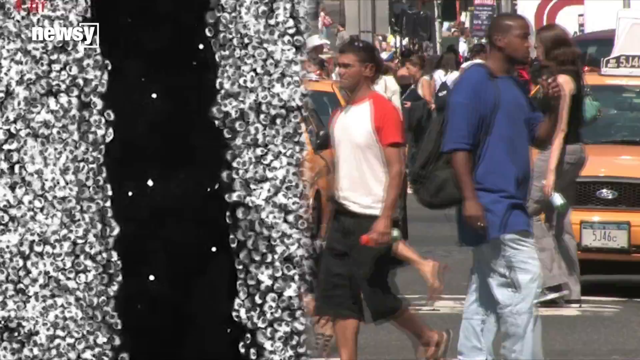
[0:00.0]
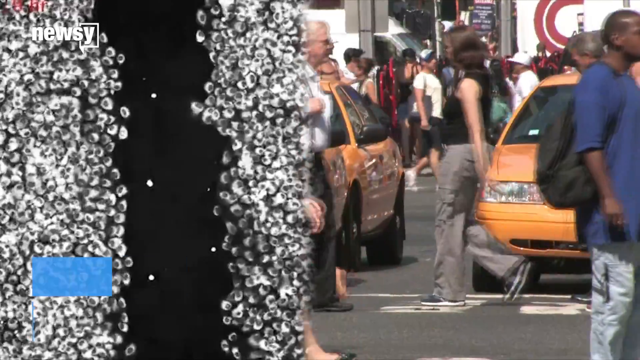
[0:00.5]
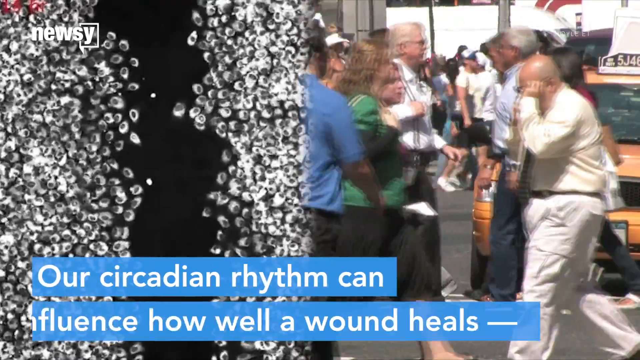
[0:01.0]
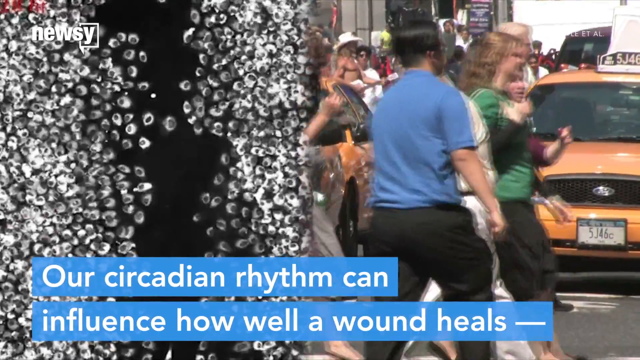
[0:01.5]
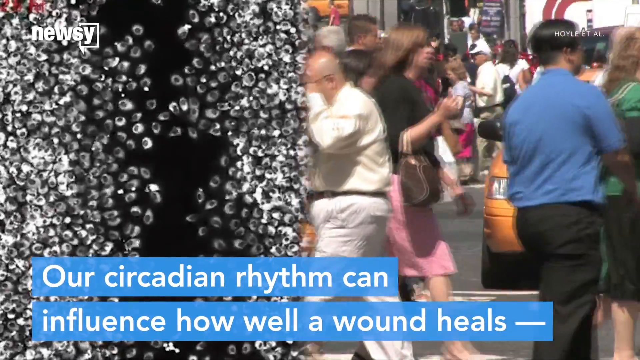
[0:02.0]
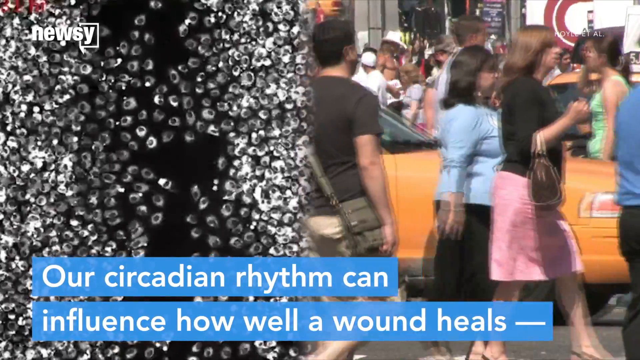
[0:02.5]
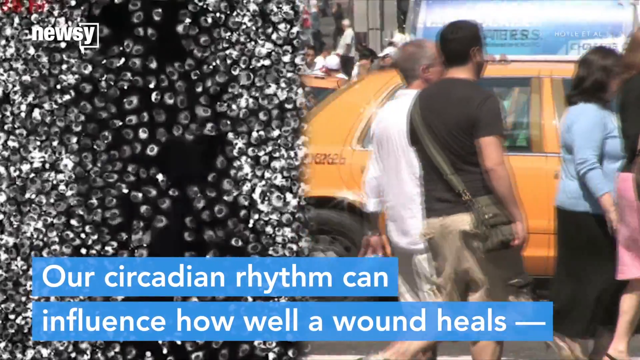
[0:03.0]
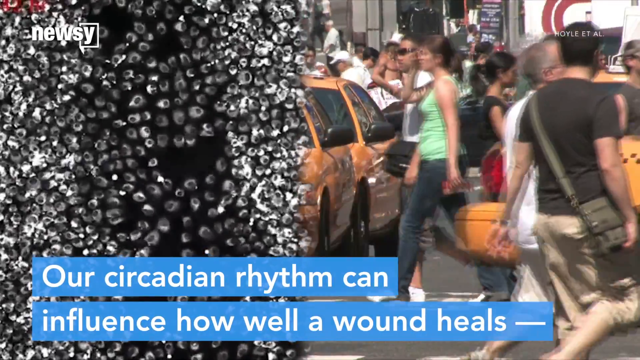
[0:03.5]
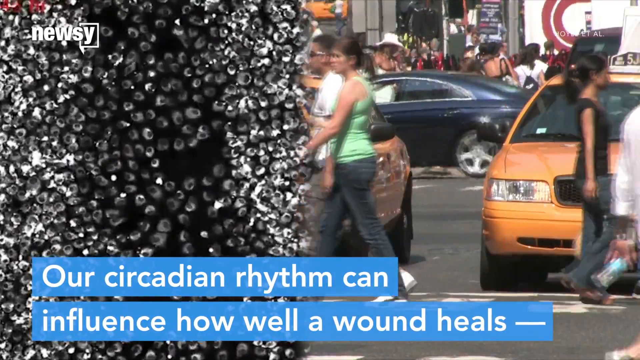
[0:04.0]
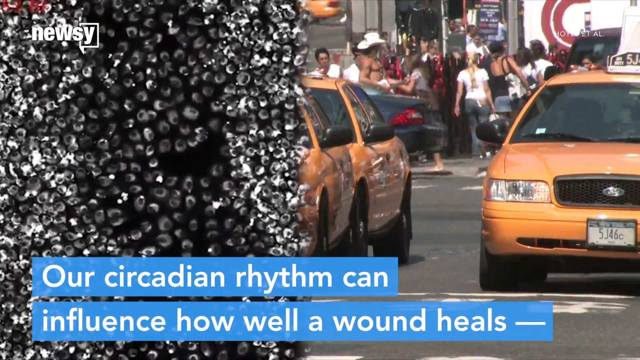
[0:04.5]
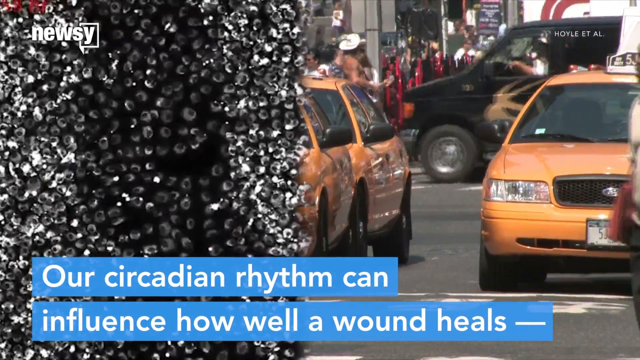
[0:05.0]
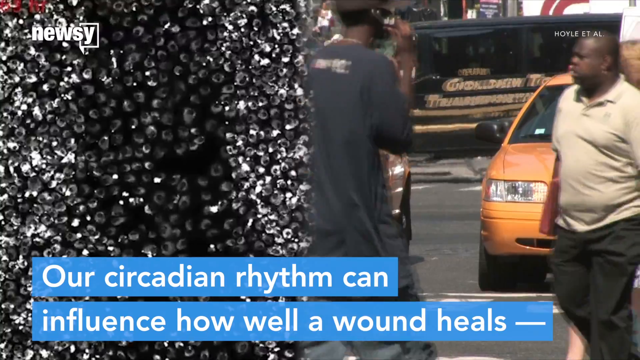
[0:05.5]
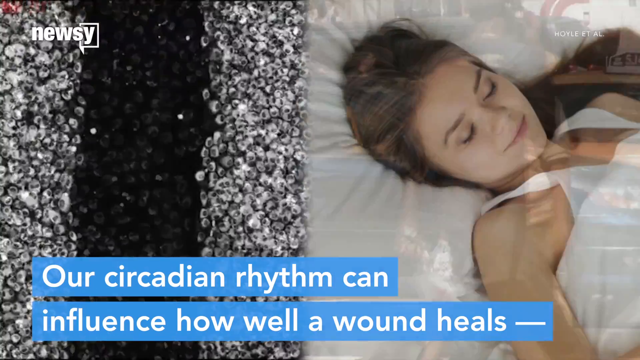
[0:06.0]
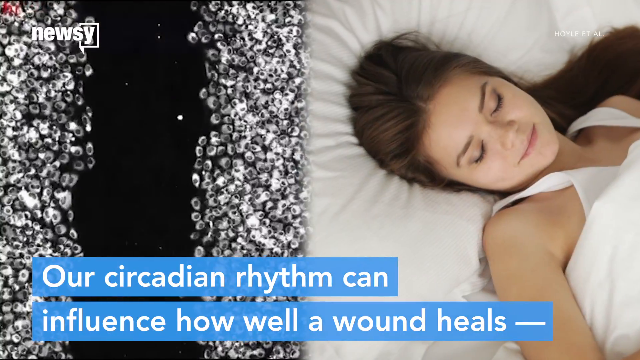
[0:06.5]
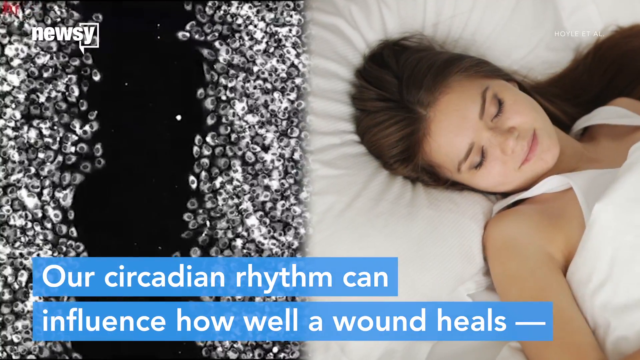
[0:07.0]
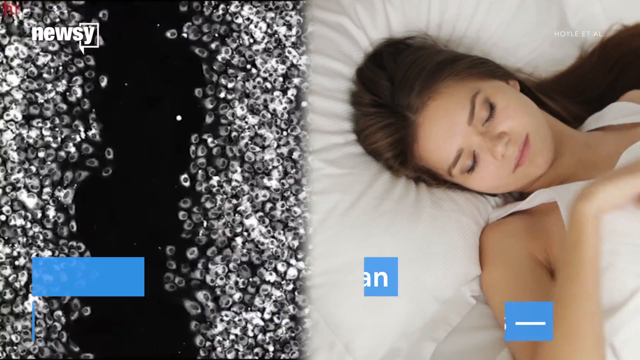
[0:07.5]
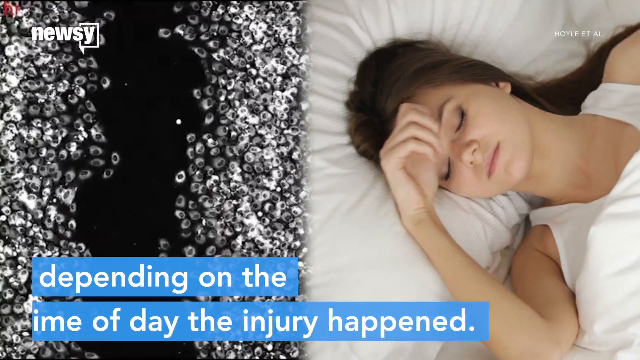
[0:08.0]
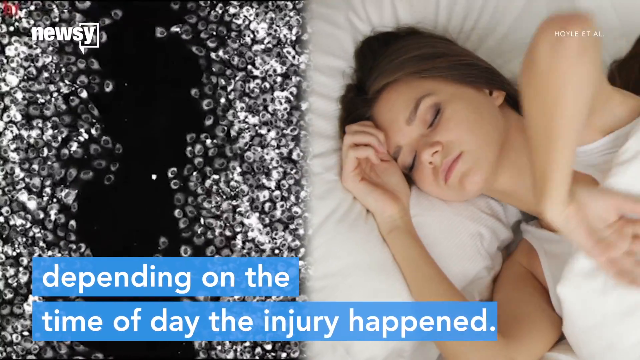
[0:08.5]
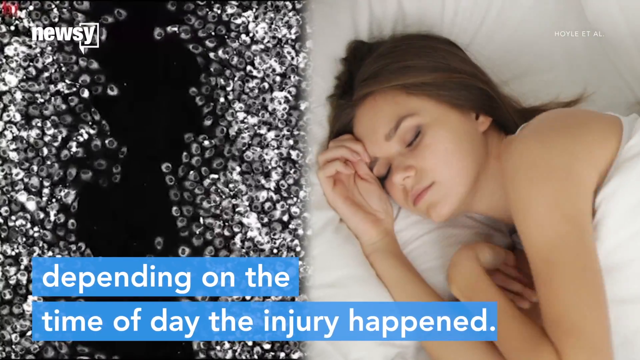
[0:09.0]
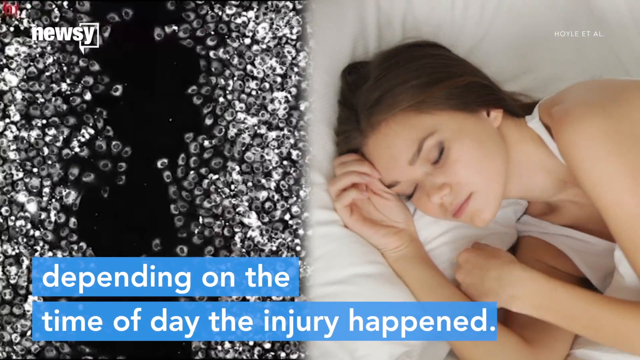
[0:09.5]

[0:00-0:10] The video is from Newsy, whose name appears in the top left corner. It shows a busy intersection in New York City with many yellow cab taxis and pedestrians. A text overlay with a blue background at the bottom of the screen concerns the circadian rhythm and how it can influence how well a wound heals. The background then changes to a woman sleeping on a bed with white pillowcases, and to her left is what looks like a microscope image of things that look like small beads. The text overlay changes to read "depending on the time of day the injury happened." The left side apparently shows a wound healing process at the microscopic level, while the right side shows a different image: first the busy New York City intersection, then the woman sleeping.